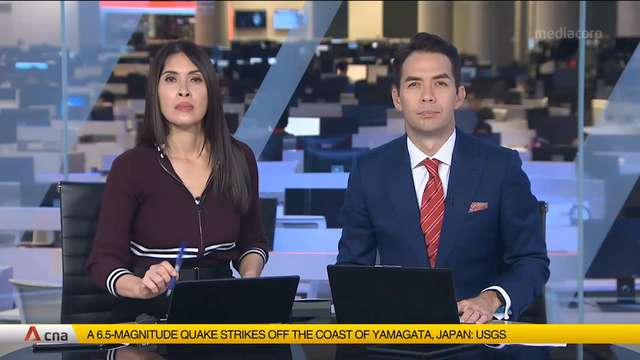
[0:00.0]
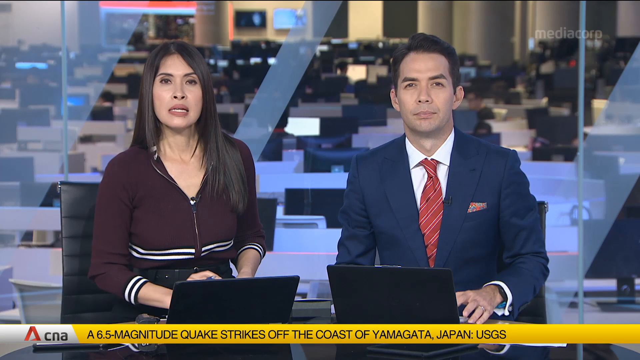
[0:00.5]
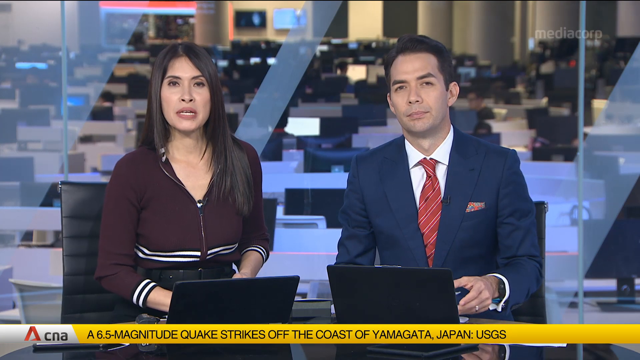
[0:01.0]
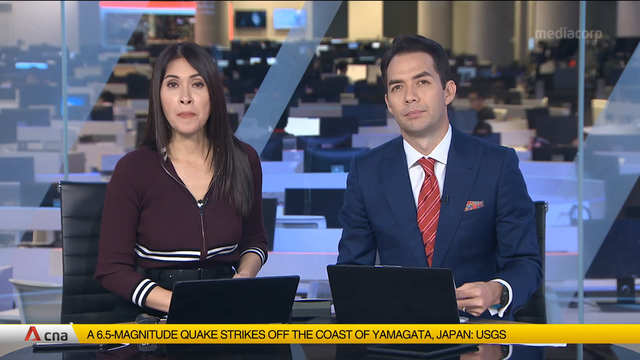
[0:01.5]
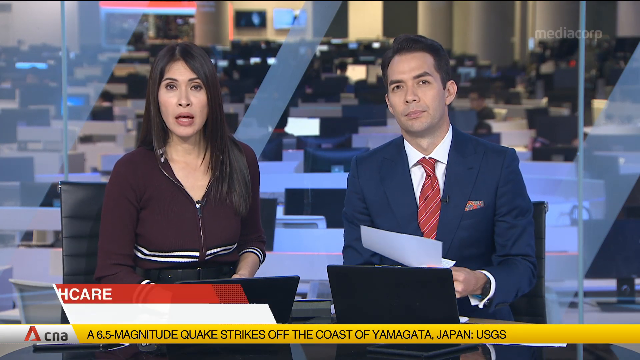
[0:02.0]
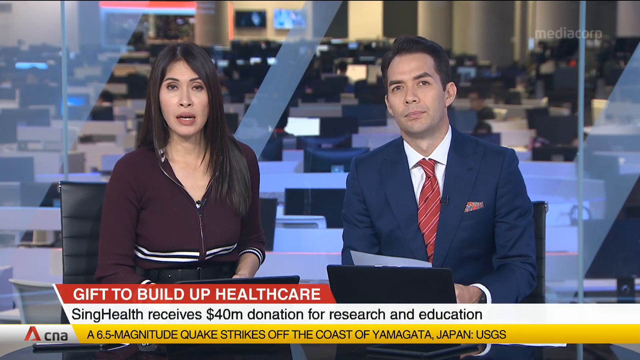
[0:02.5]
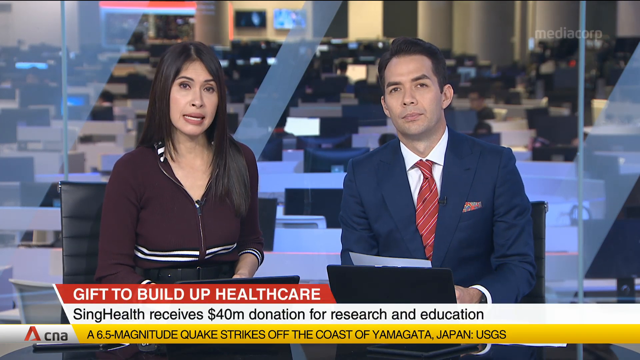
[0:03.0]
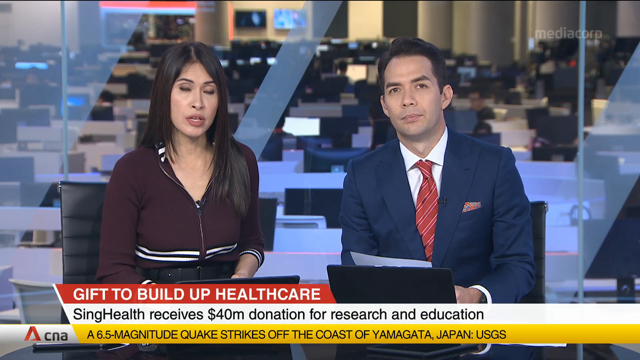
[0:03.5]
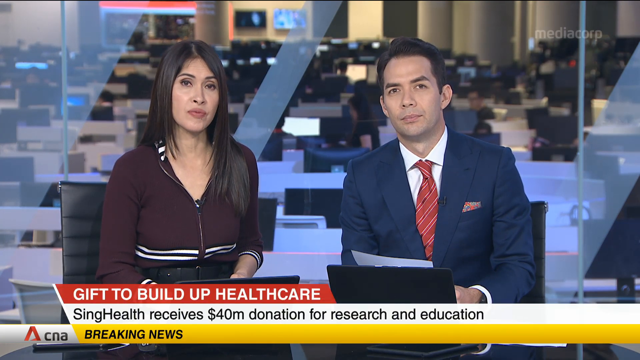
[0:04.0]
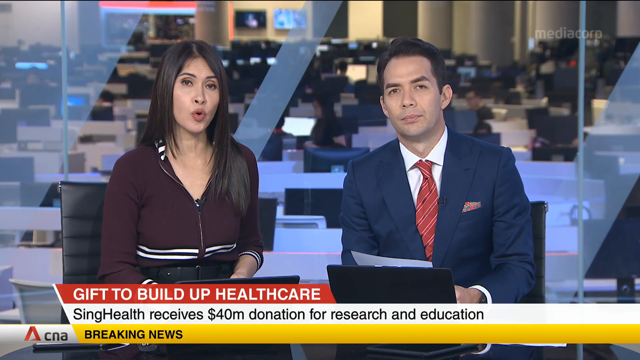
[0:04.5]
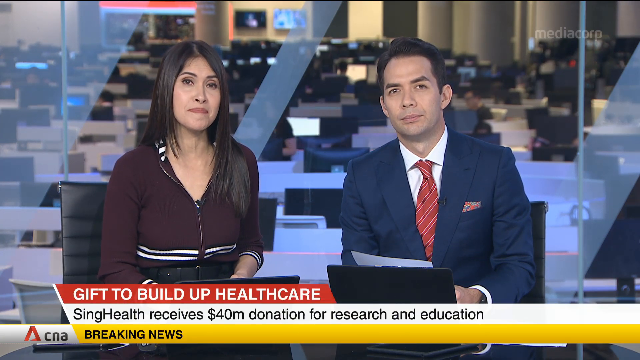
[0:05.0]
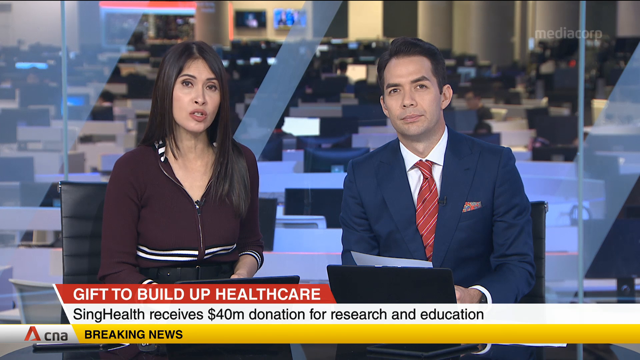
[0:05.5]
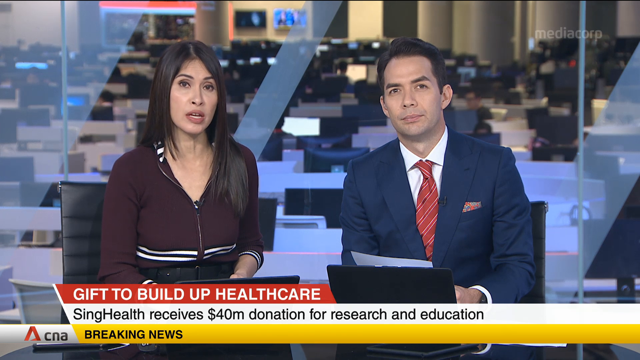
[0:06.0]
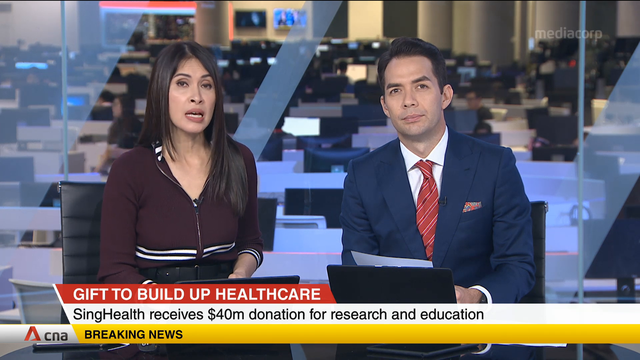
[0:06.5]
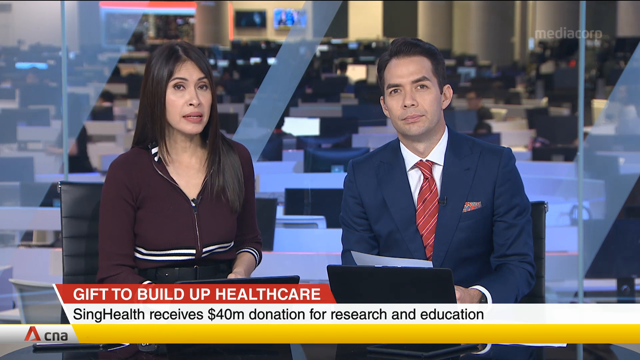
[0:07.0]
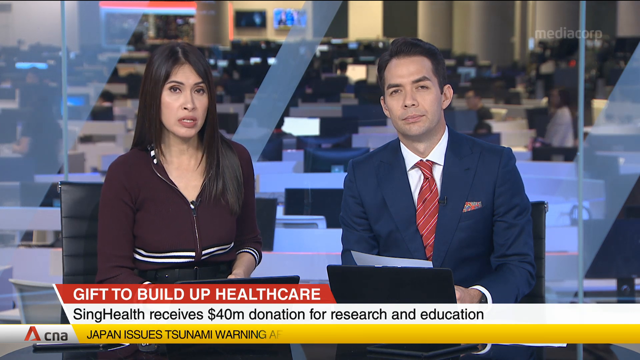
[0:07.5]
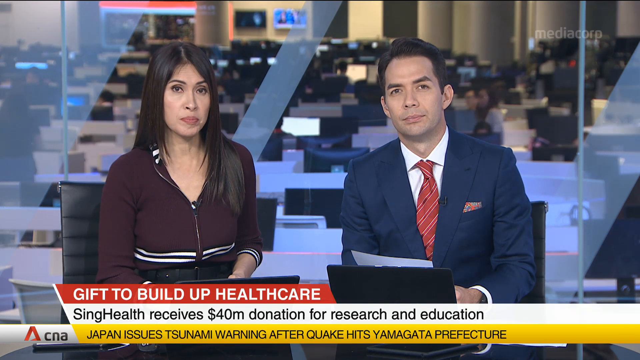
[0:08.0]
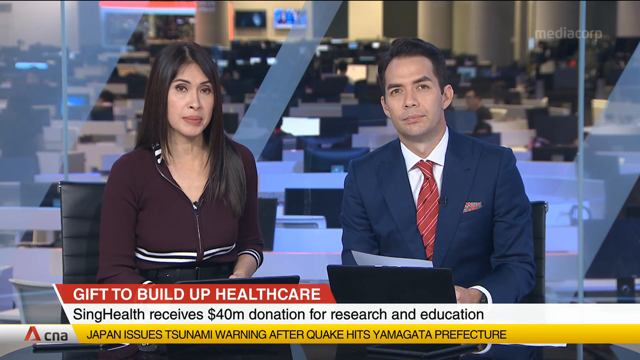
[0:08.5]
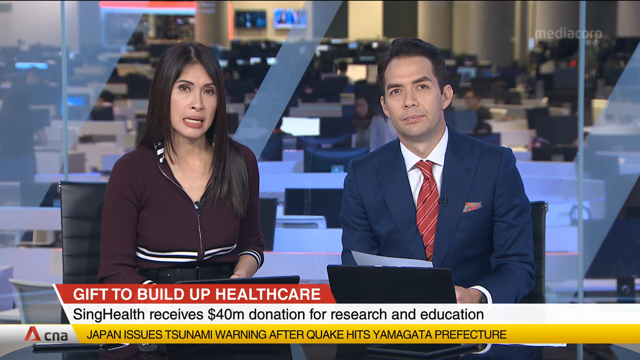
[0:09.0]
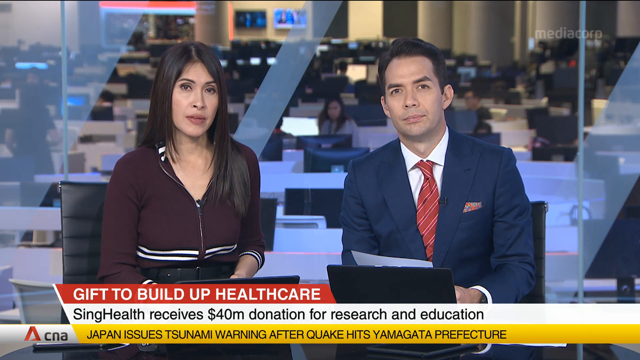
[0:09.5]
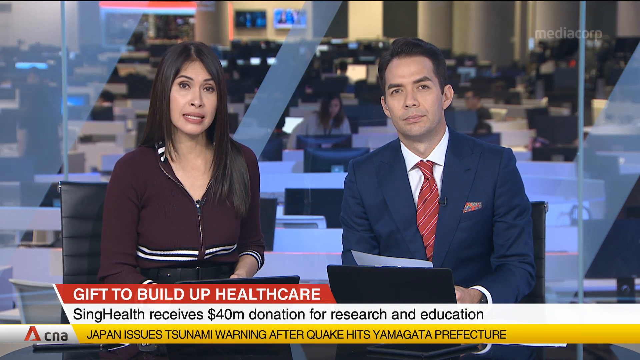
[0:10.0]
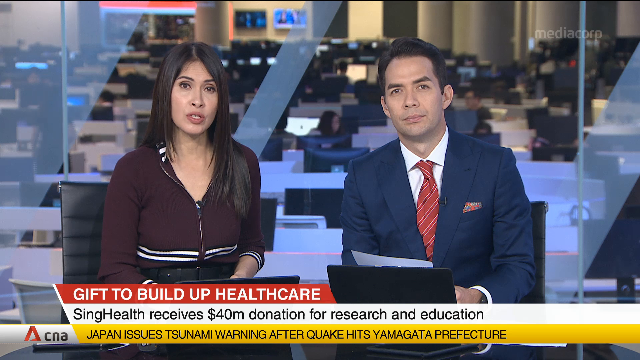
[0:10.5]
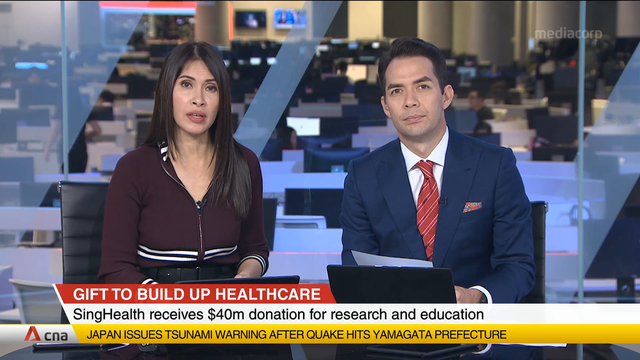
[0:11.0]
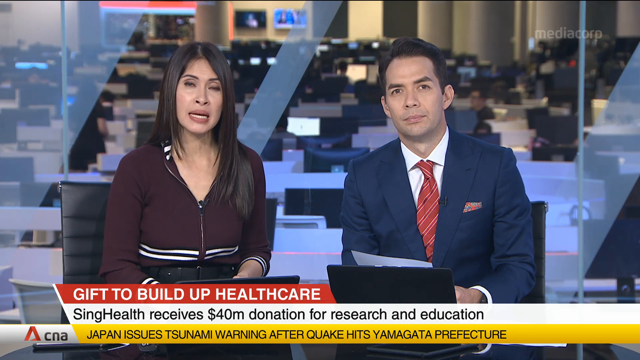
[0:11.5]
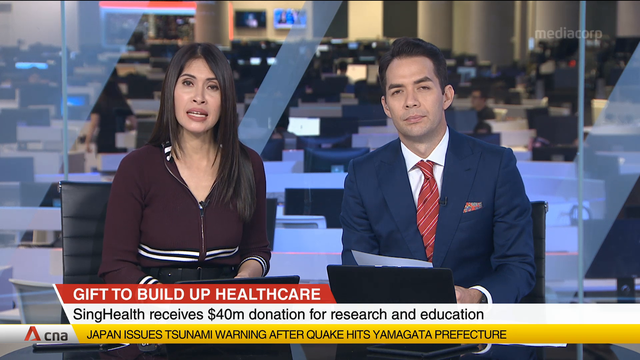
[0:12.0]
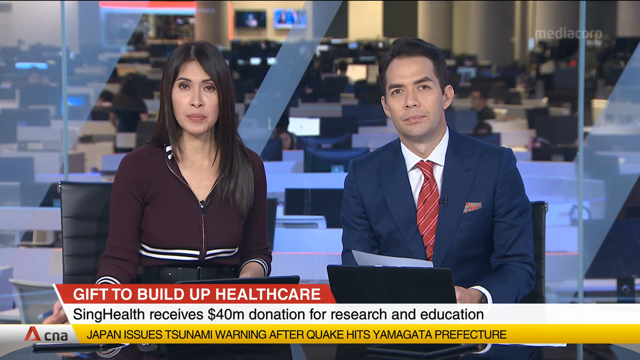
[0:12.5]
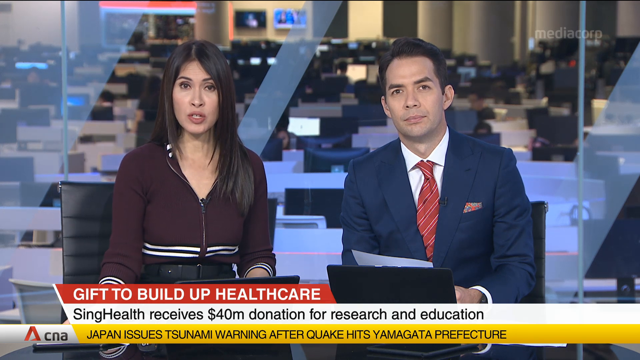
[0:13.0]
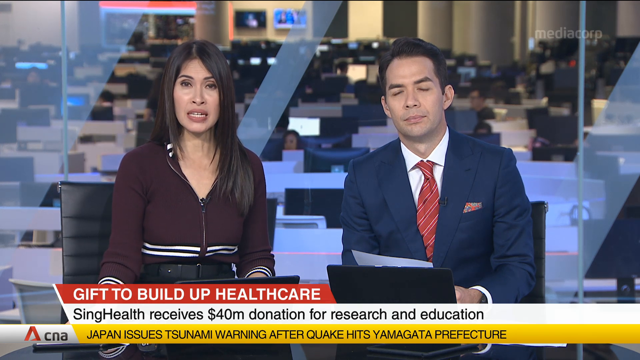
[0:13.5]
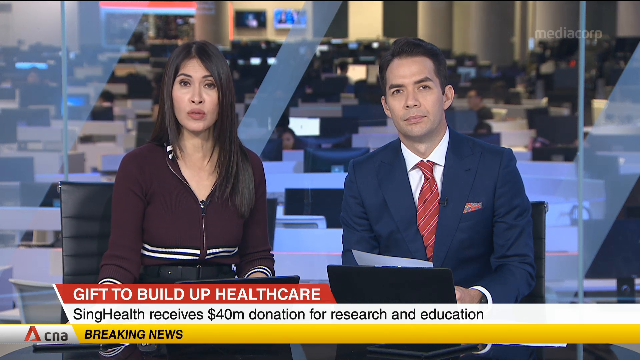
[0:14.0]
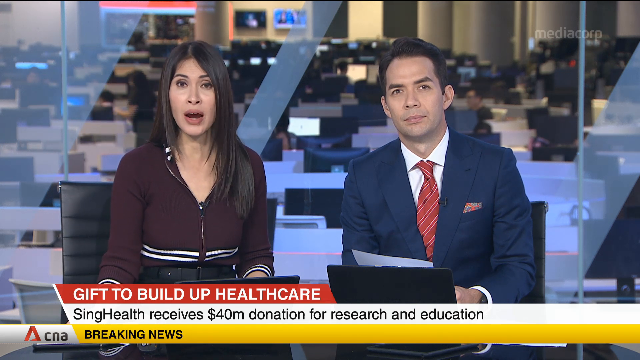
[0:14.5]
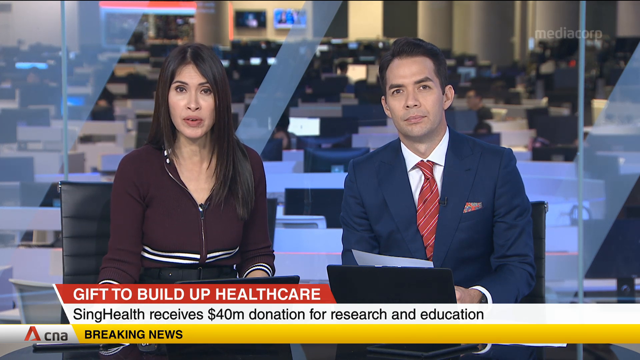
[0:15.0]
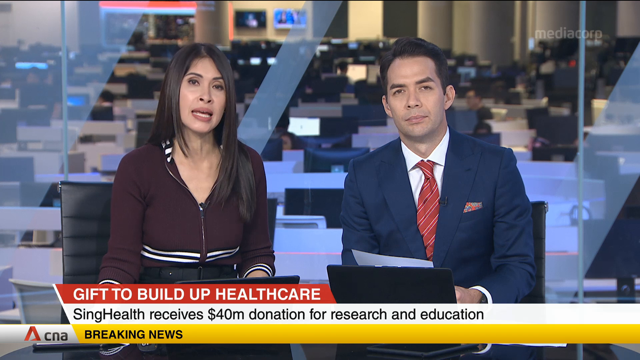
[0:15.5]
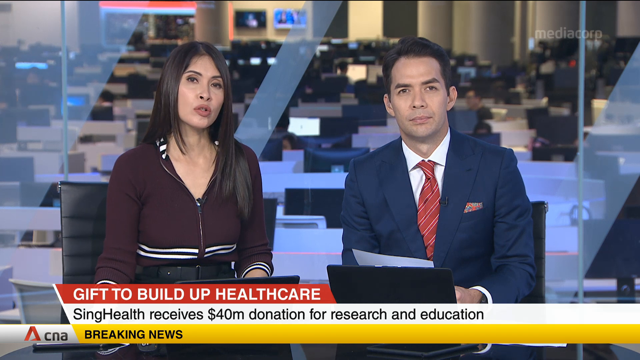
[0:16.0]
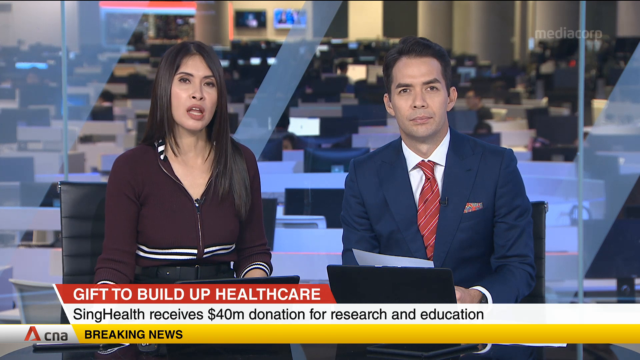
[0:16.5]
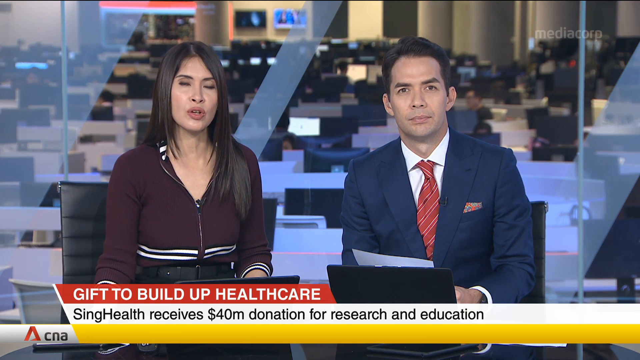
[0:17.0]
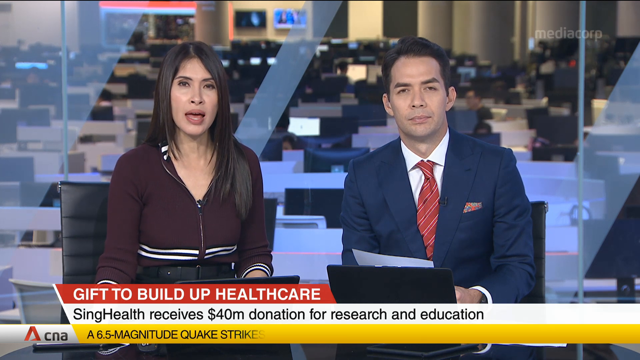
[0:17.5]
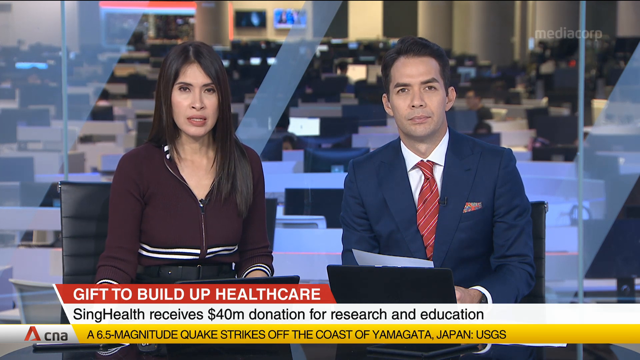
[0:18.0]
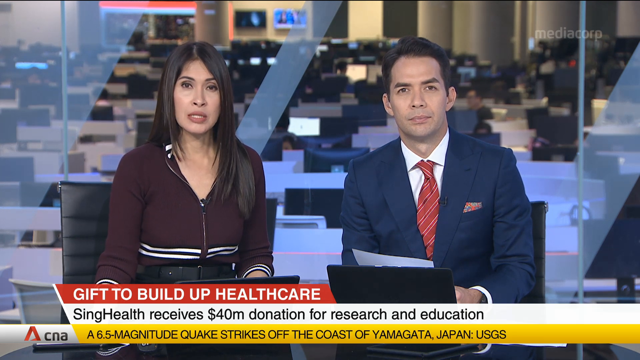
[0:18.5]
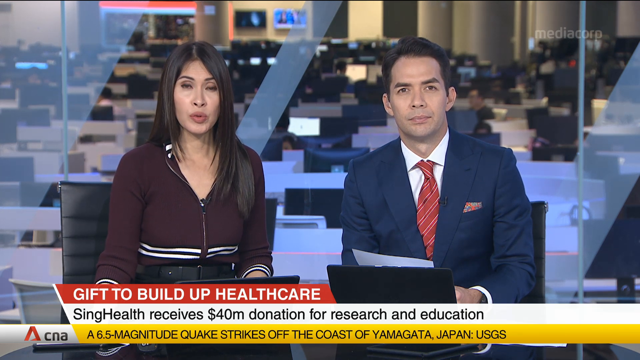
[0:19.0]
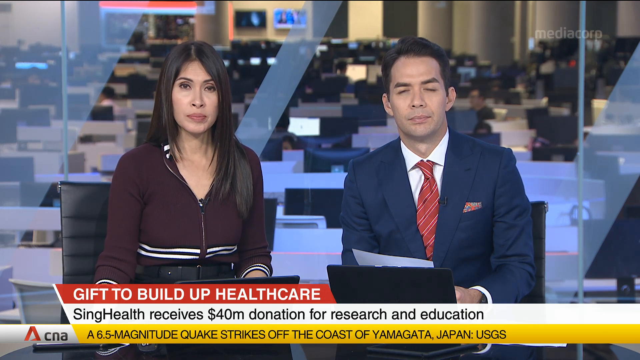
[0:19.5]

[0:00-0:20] Two news anchors broadcast the news from behind a dark brown wooden table, each with an open laptop in front of them, the laptops' black backs facing the viewer. A woman on the left has brown hair down to the center of her chest and wears a long-sleeved purple shirt with some white stripes. A man on the right wears a blue suit coat, a red tie striped in various shades, and a white dress shirt. Both are probably in their 30s. Behind them is an office or conference room with white tables and a bunch of computer monitors at different stations where people can sit. A banner comes in with "Gift to build up healthcare" in white capital letters on a medium red background; below it, on a white background, black text reads "SingHealth receives 40 million donation for research and education." Below that is a yellow banner reading "breaking news," and to its left is a red triangle followed by "CNA."